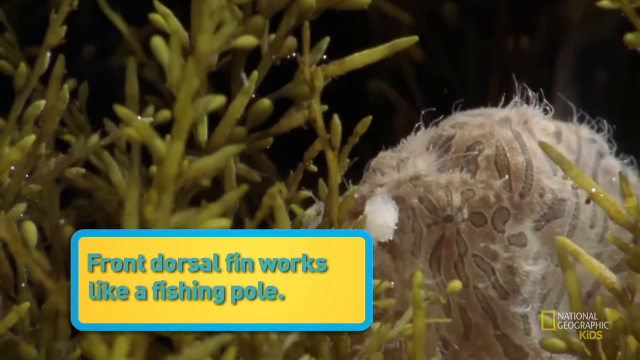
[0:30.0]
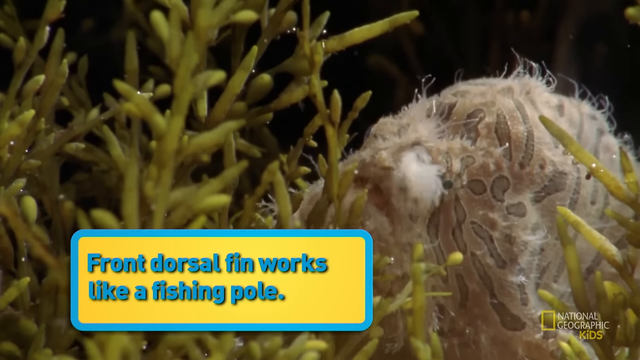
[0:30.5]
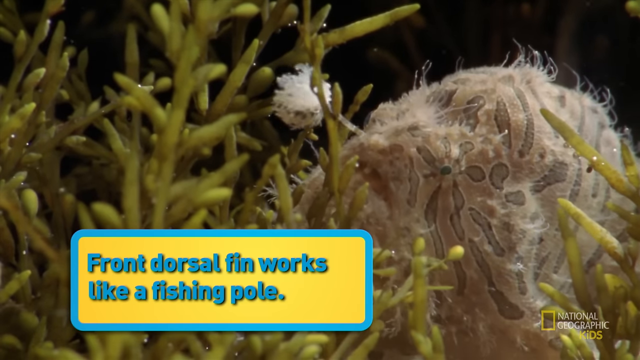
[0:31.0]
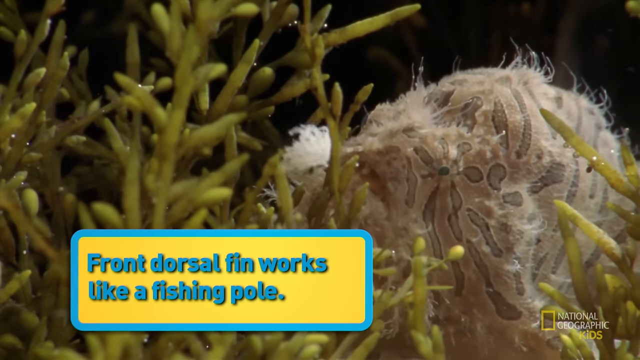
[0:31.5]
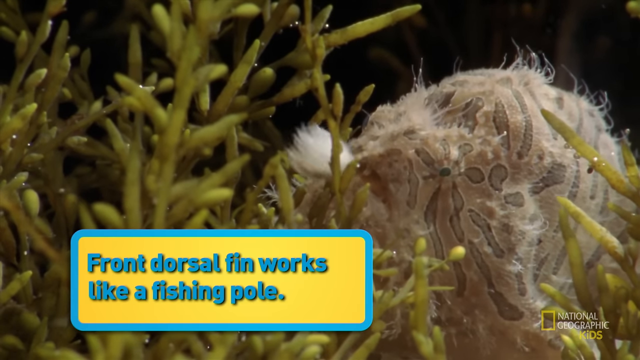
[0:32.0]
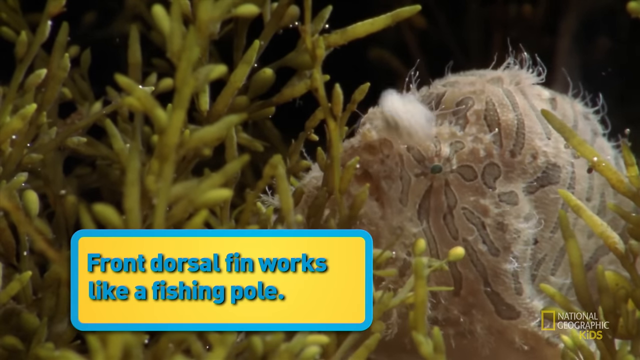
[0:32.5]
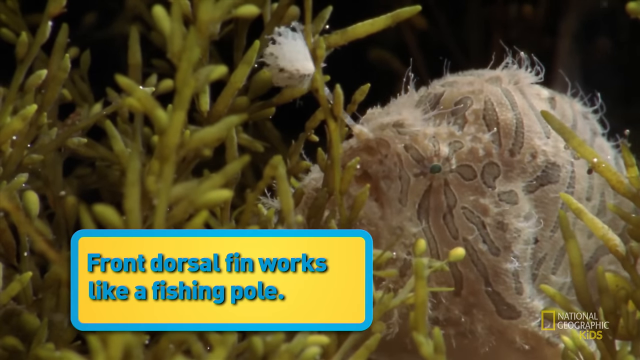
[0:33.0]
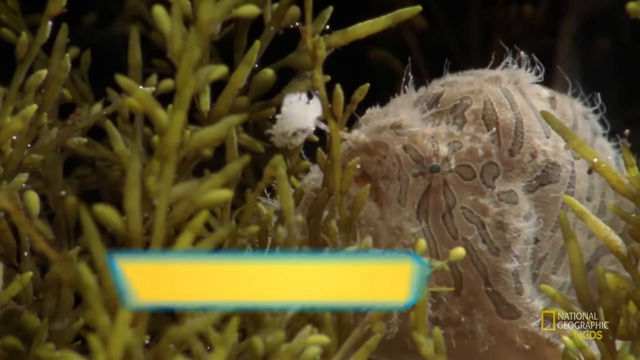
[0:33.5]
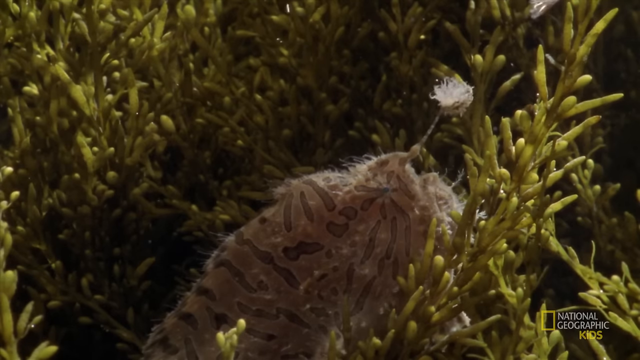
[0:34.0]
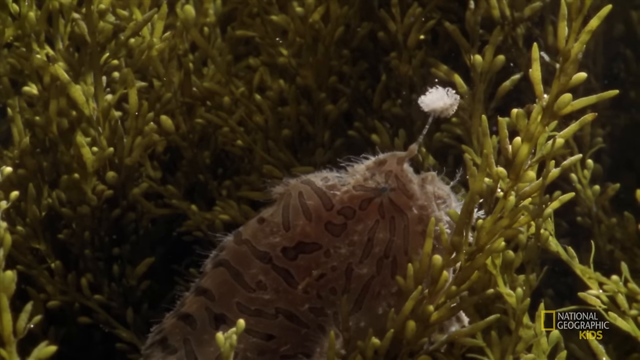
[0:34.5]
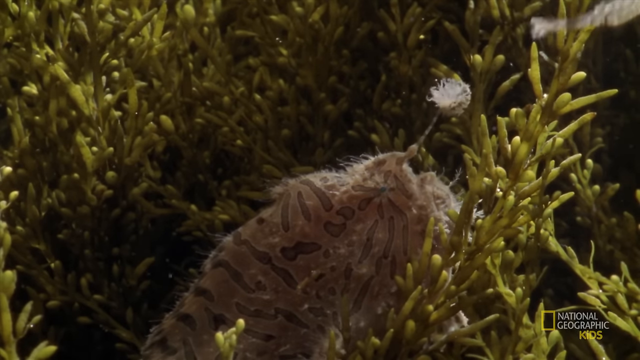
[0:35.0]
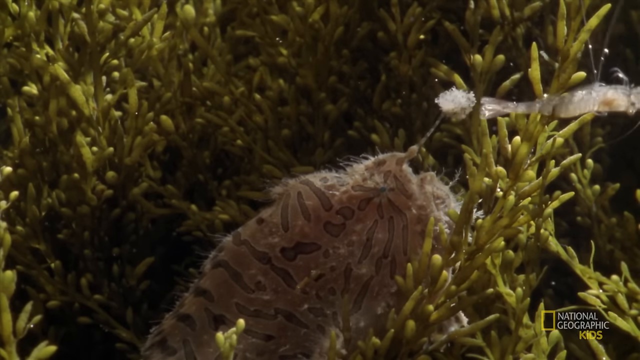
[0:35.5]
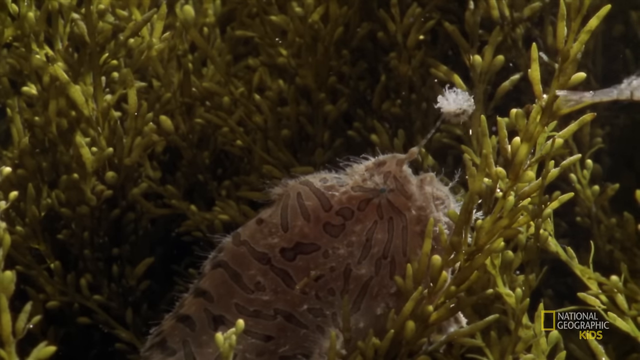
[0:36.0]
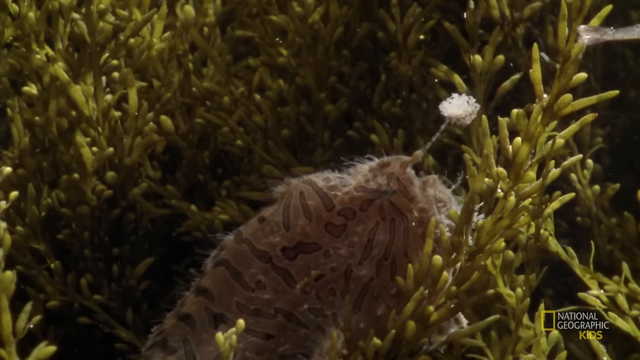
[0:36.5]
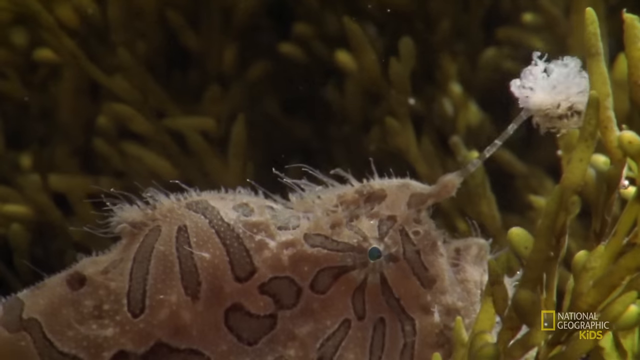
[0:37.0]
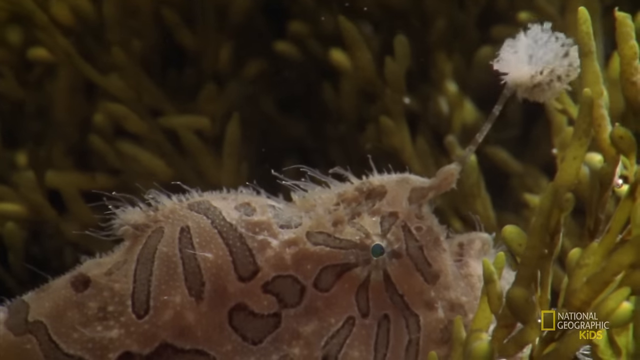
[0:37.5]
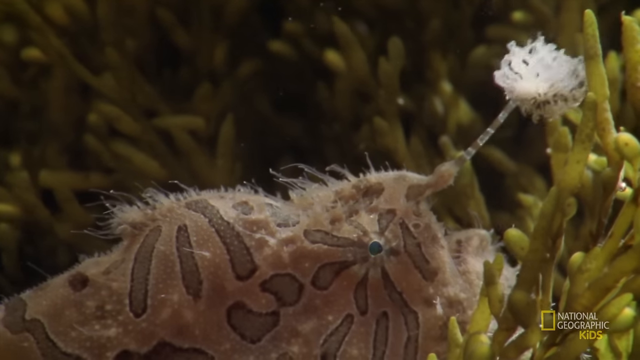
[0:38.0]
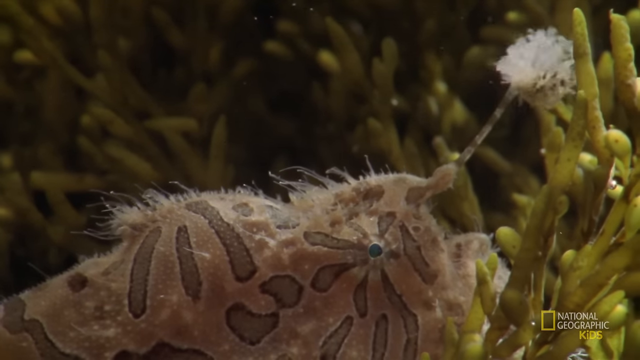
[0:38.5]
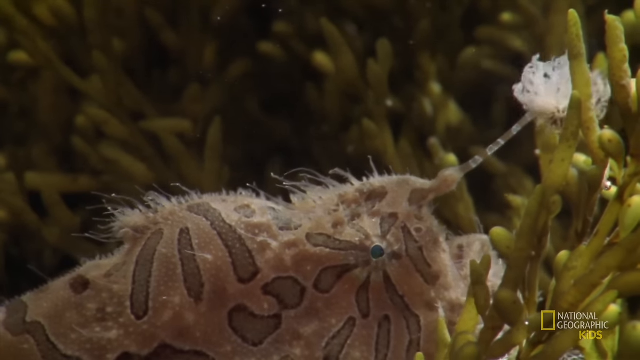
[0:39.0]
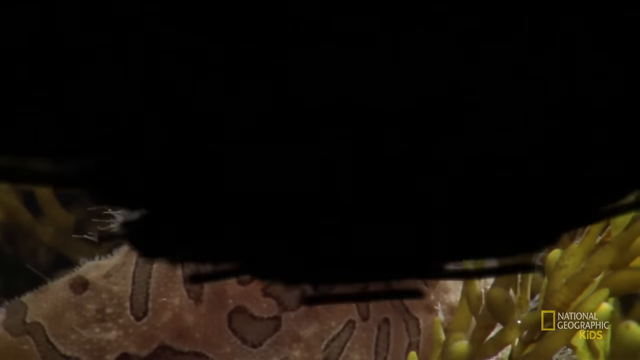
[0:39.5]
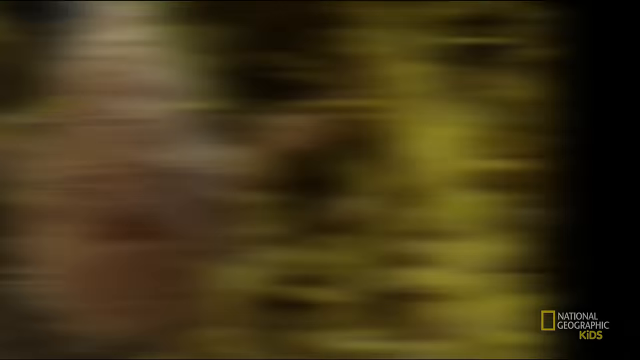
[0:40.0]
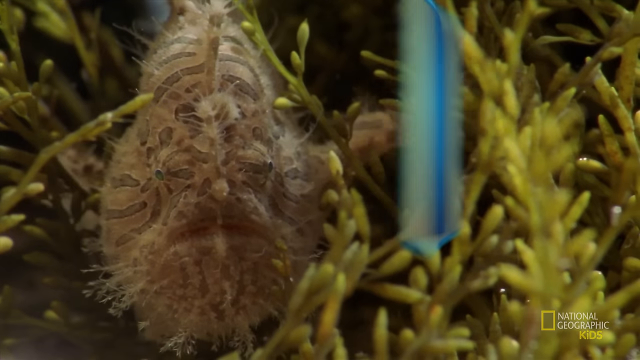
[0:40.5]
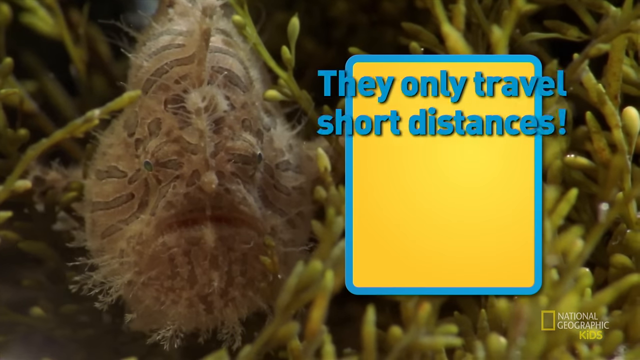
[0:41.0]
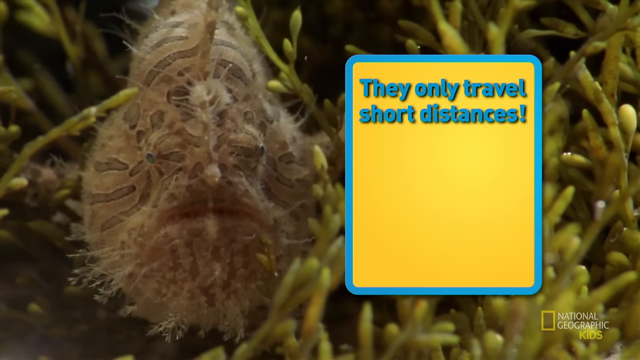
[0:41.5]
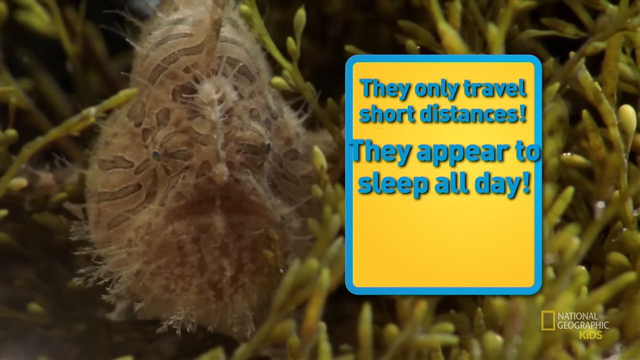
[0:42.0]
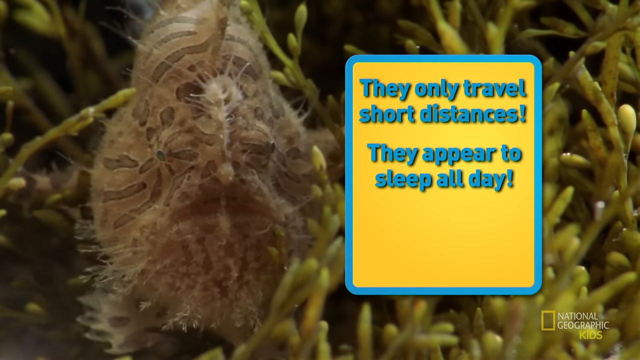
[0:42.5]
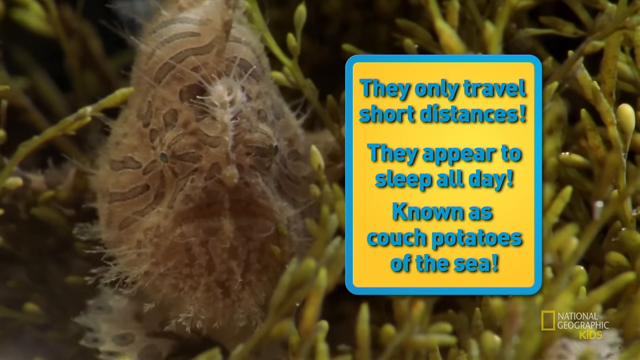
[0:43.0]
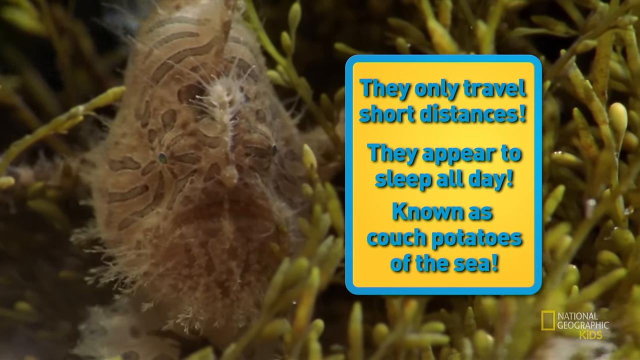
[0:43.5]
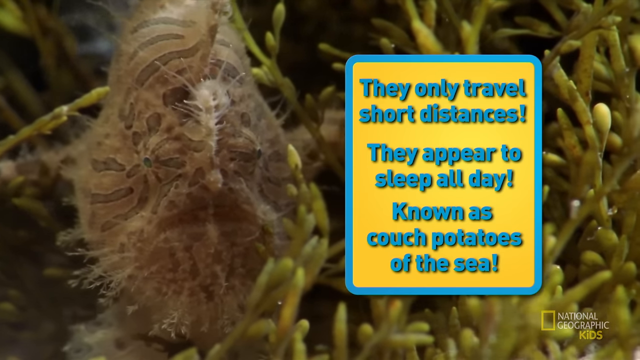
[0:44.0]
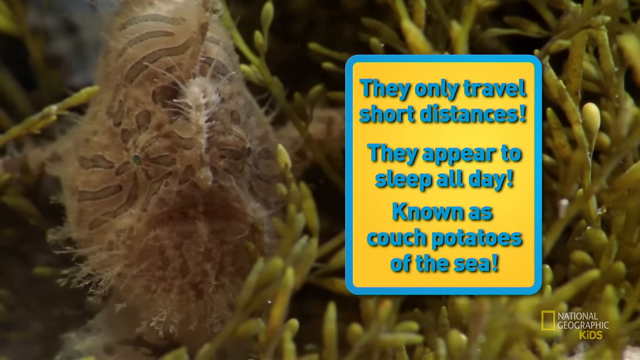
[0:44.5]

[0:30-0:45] Several views of a fish are shown: its front, its face, its top. This may be the frogfish, although it is a different fish from the one the two yellow arrows pointed to earlier. The fish is light brown with some dark brown stripes and is quite ugly. It has a sort of pole on top of it with a fluffy end, and it is kind of hidden in the middle of the seagrass.